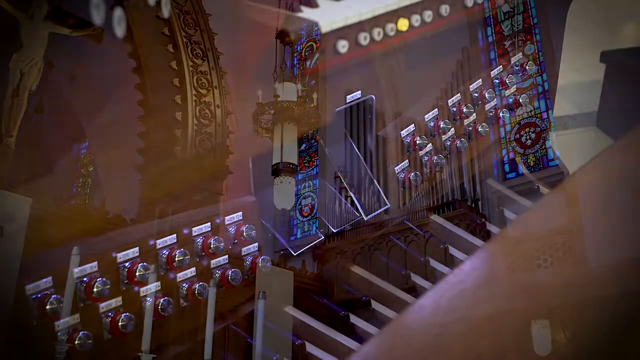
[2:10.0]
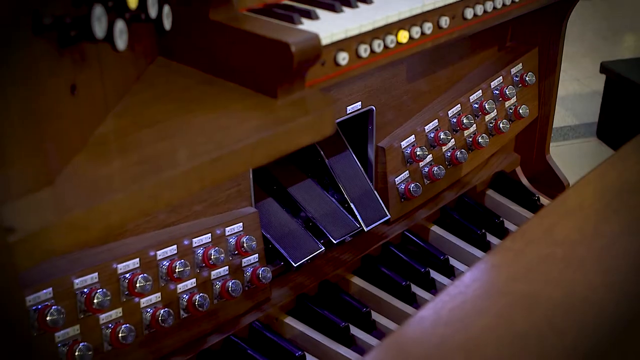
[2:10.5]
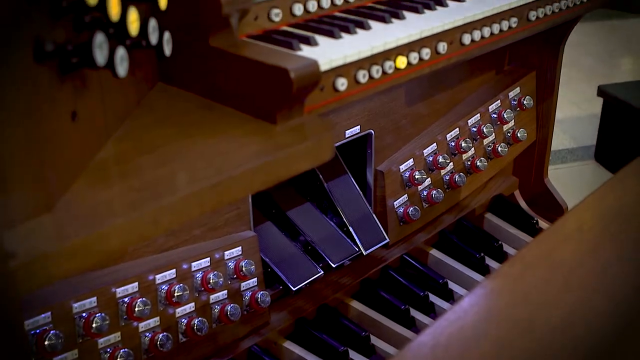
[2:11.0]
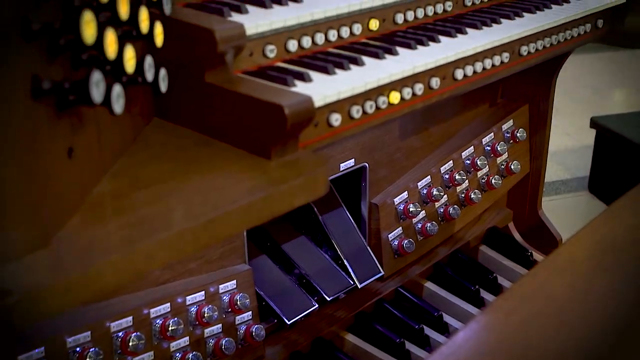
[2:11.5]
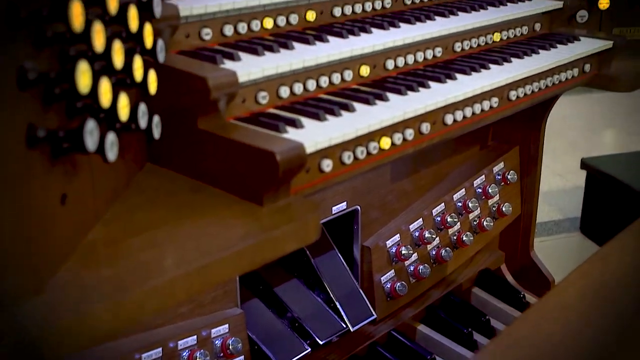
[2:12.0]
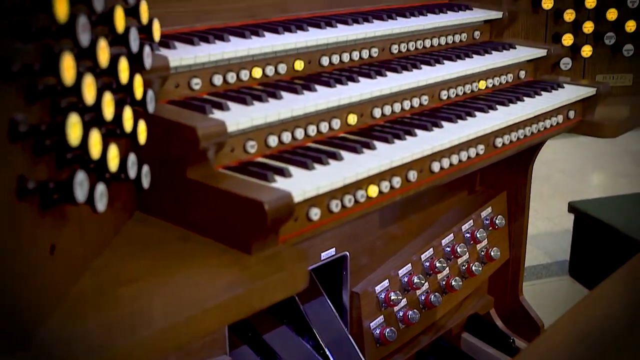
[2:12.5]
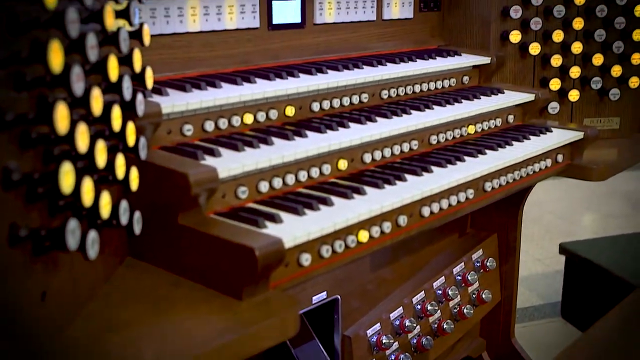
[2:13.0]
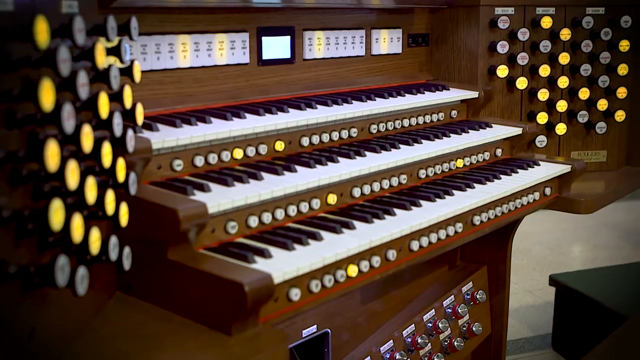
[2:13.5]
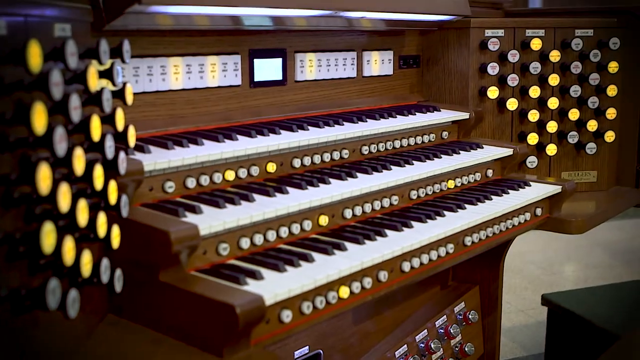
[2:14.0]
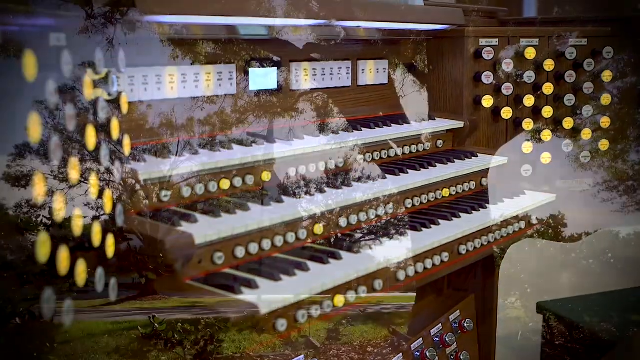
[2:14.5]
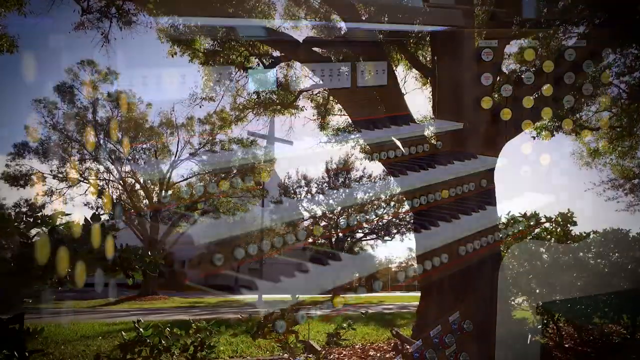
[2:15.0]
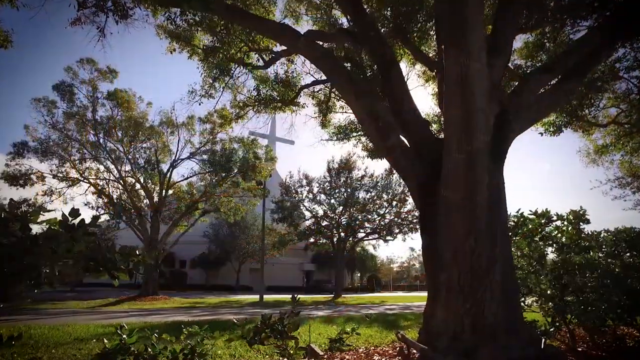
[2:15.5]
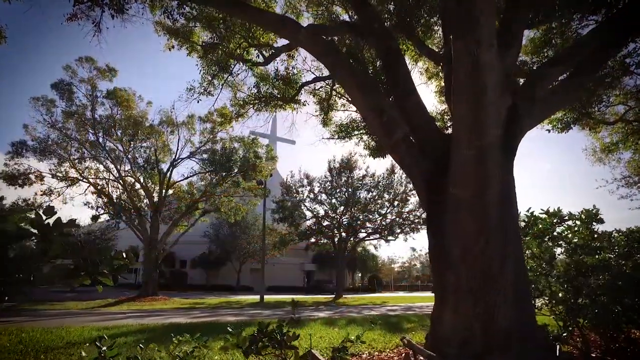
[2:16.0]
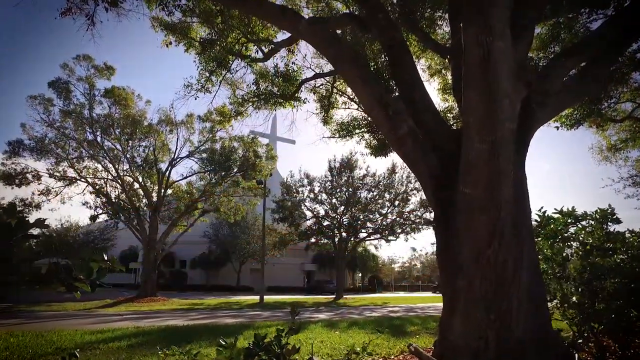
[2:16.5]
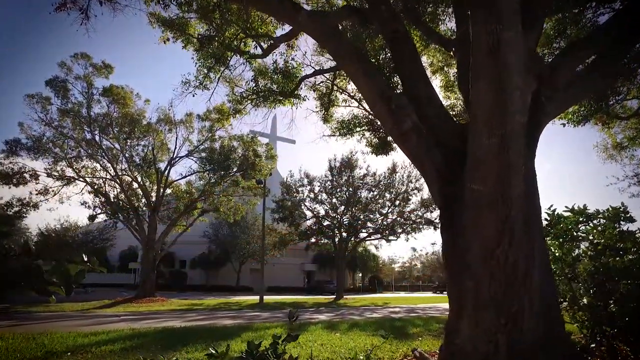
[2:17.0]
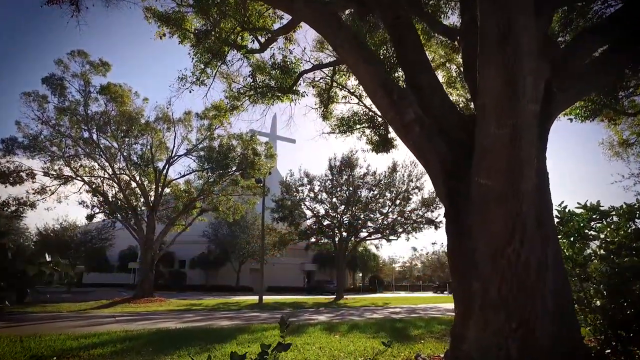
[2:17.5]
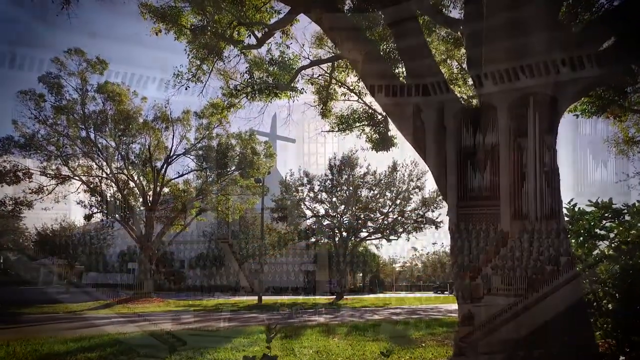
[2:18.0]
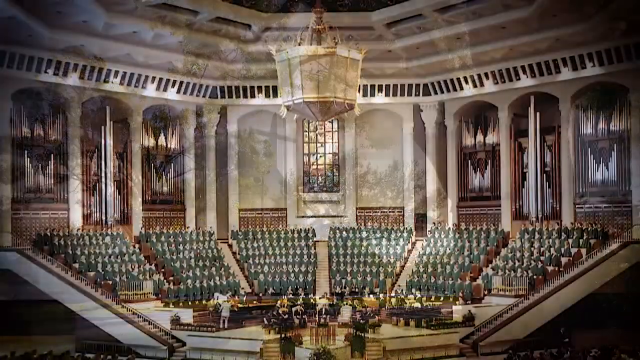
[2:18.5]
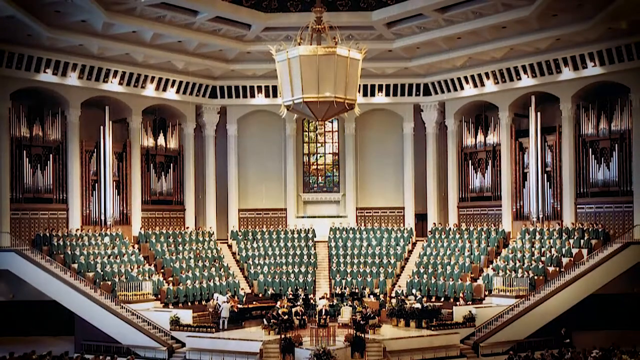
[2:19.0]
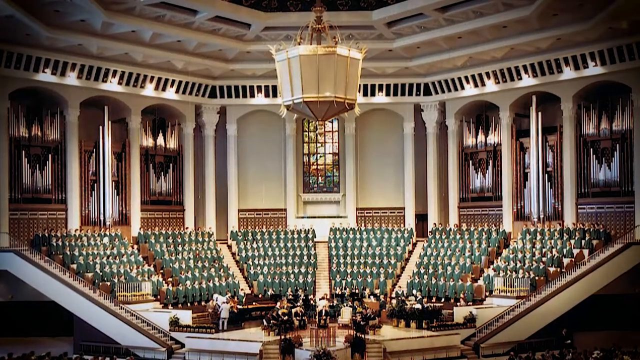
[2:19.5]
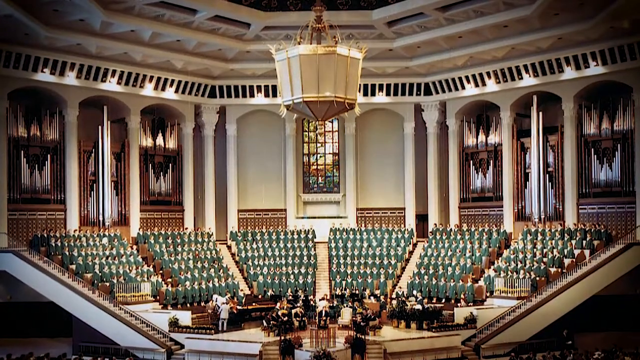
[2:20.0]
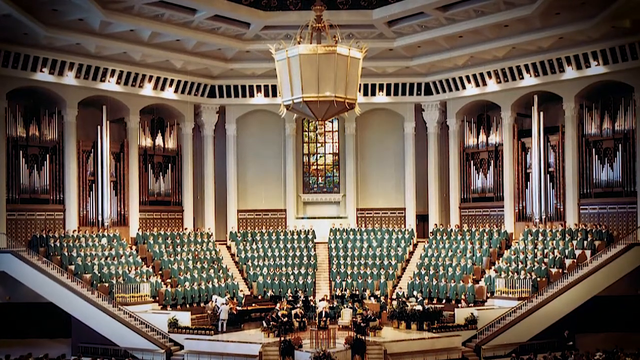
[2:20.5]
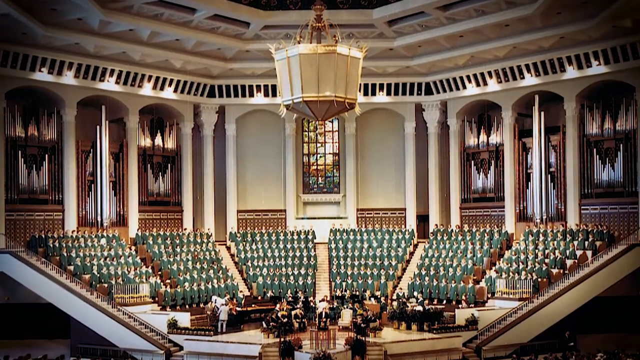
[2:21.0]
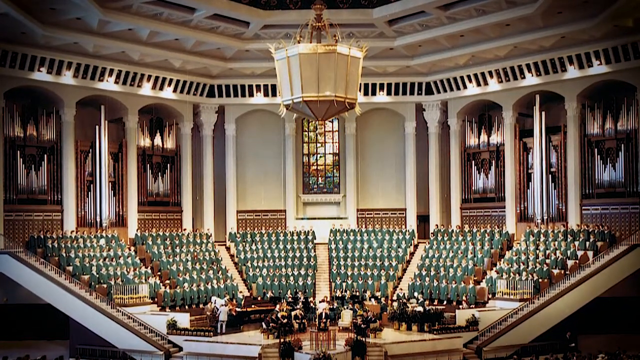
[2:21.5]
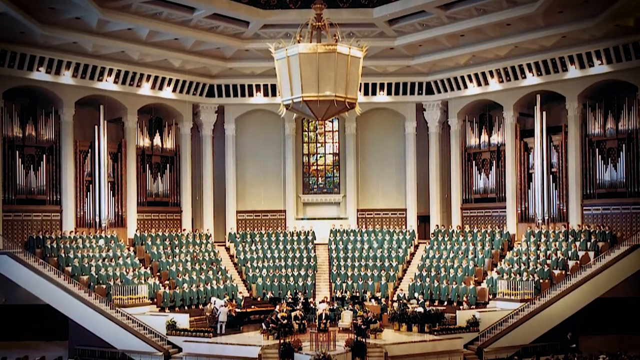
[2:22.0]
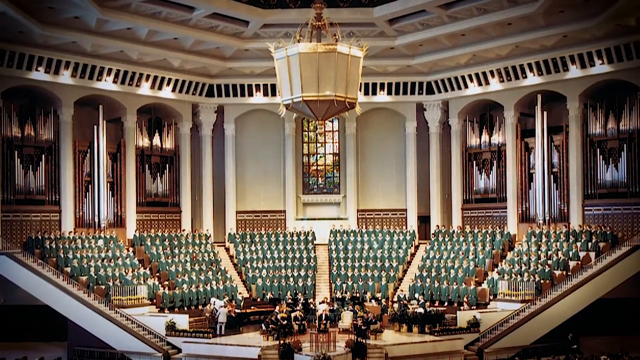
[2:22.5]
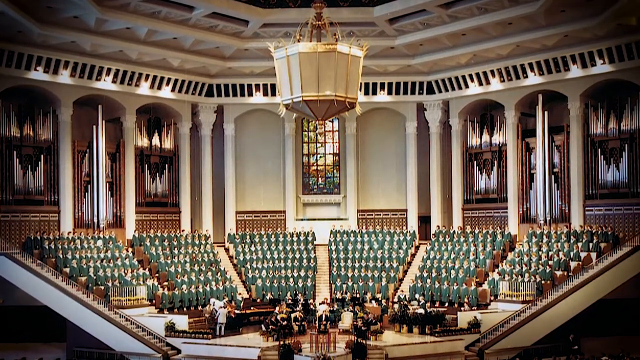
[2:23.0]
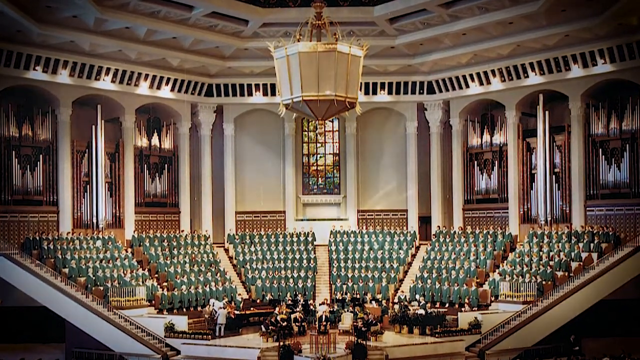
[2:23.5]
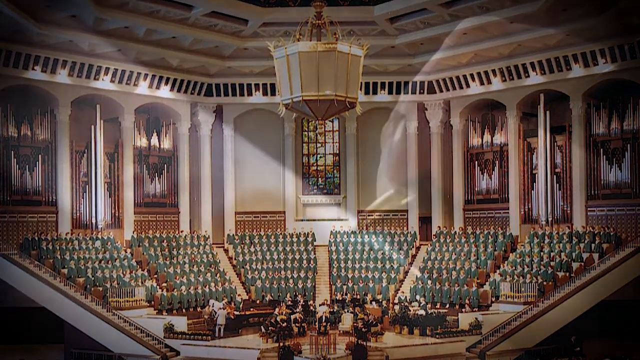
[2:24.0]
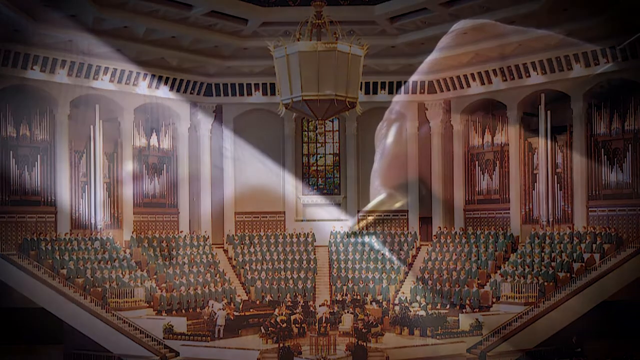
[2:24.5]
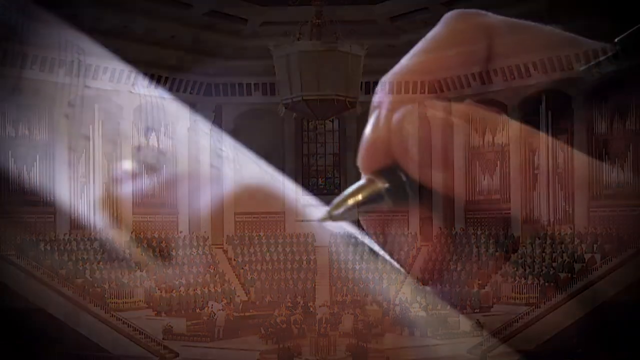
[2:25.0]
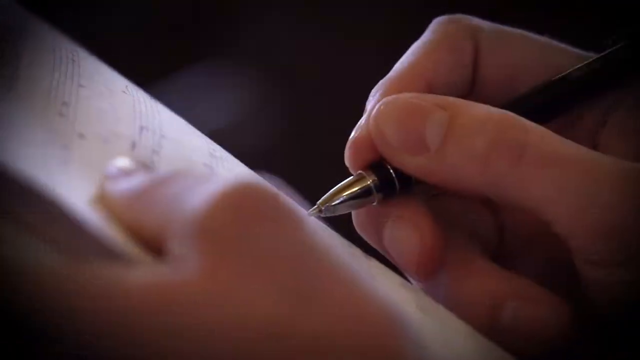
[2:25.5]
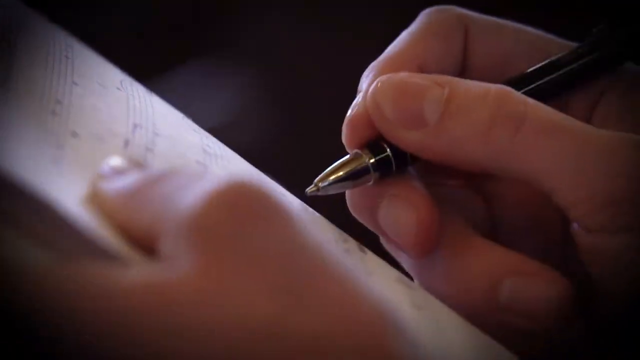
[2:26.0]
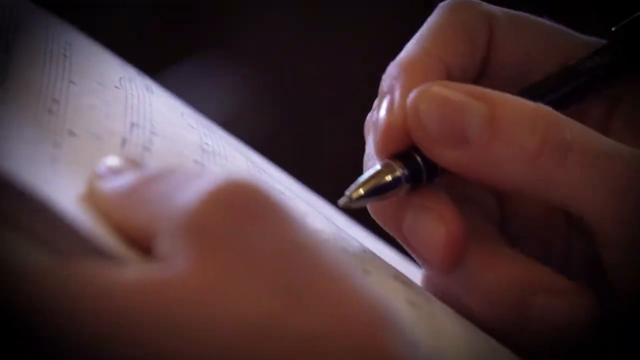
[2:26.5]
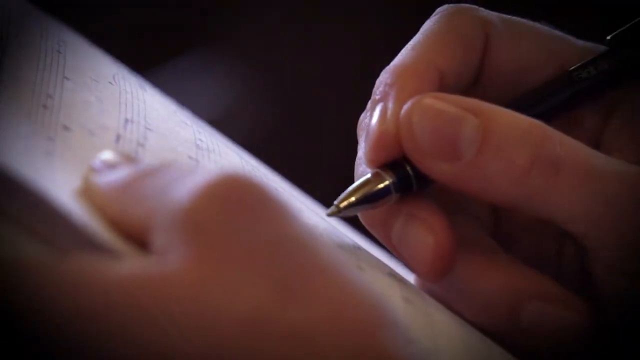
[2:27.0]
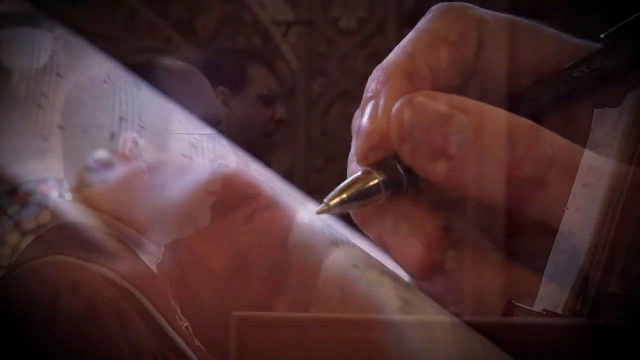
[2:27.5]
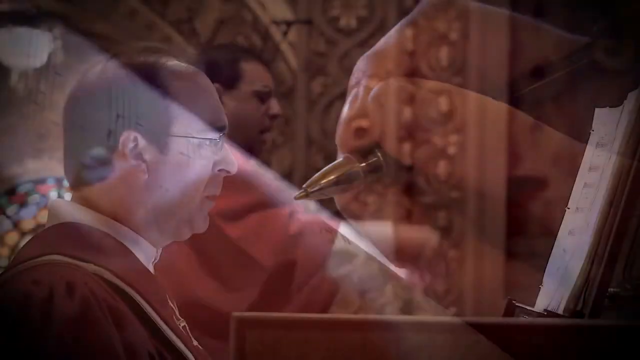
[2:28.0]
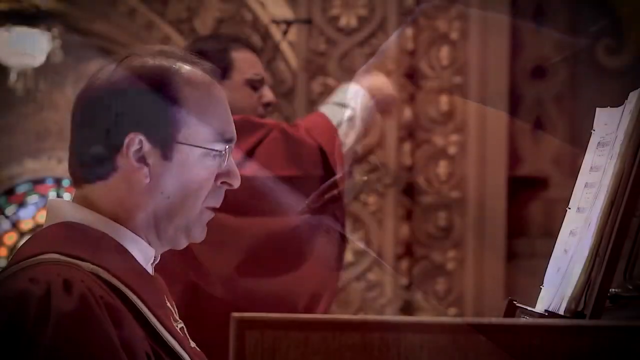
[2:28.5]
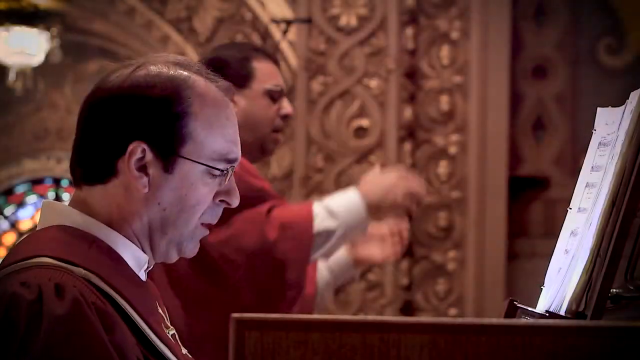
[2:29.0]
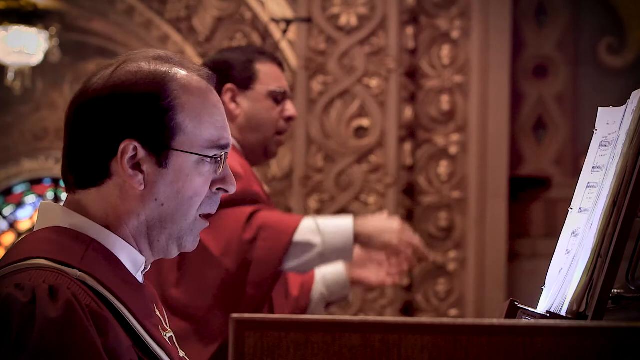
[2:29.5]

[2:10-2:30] The camera slowly pans up an organ from the bottom. There are three pedals, and on the right there are three keyboards, each full of stops above and below, with more stops on the left-hand side and more on the right. The image moves to the outside of a modern-looking church with a large white cross, the camera panning slowly closer. In front is a large tree in full leaf, and closer to the church is a thinner, shorter tree, also in full leaf. Sunlight comes in from the right, and the trees are hazed out. Then the inside of a very large church appears, with six sets of organ pipes arranged three on the left and three on the right. A very large lamp hangs down in the center from an ornate ceiling with many rows of white plasterwork, and a stained glass window is directly in the center at the back. Below it, on risers, are six different sets of singers, all in green, standing at attention, and below them a pit orchestra is playing. The camera pans slowly into them, showing a conductor at the front. Next, a pair of hands: the left hand holds a musical score and the right hand writes on it with a pen. Then the organist and the choir director are seen in profile, both wearing red robes.